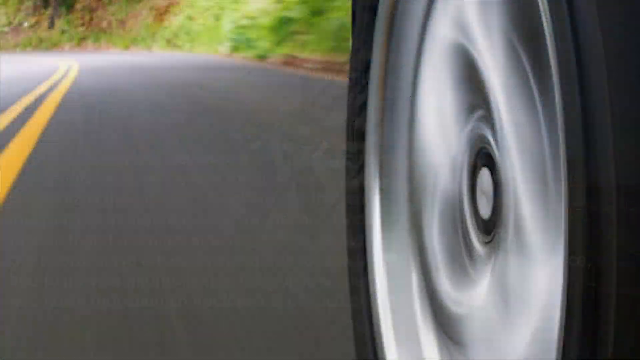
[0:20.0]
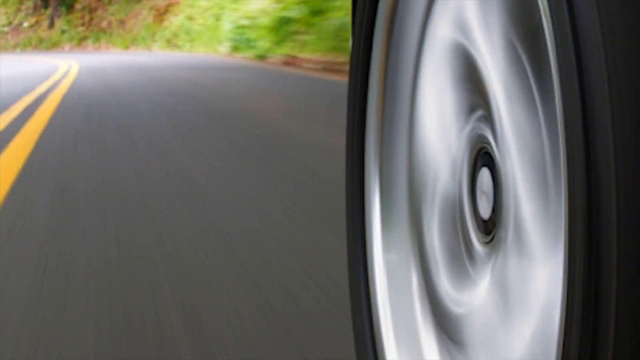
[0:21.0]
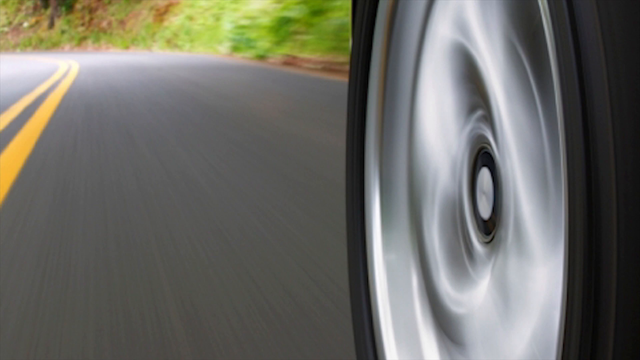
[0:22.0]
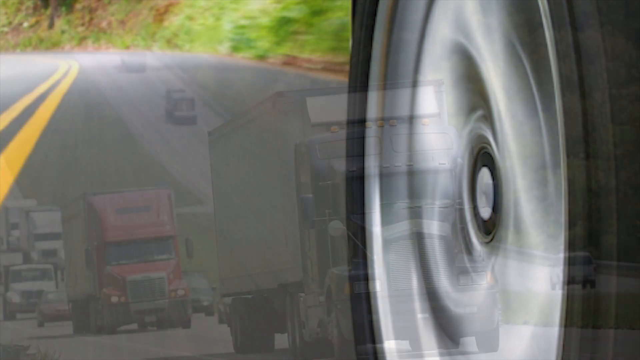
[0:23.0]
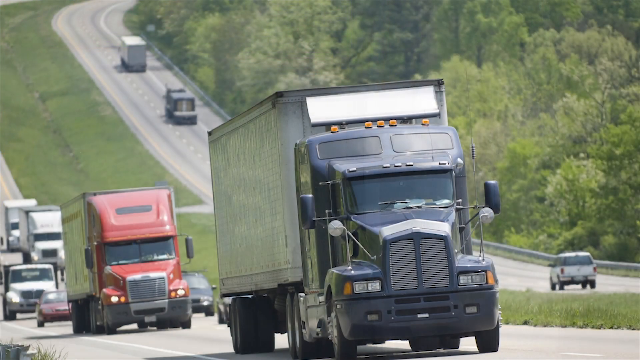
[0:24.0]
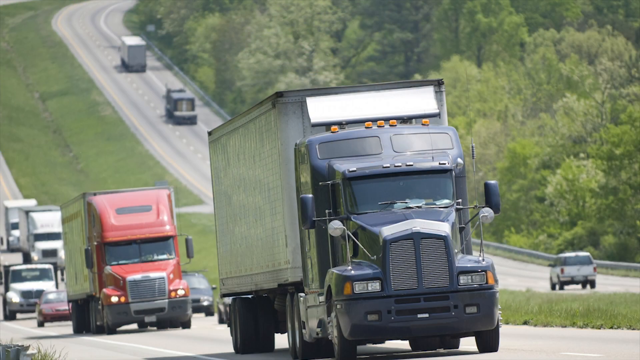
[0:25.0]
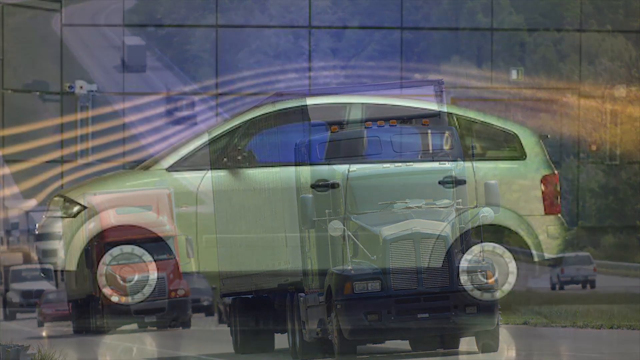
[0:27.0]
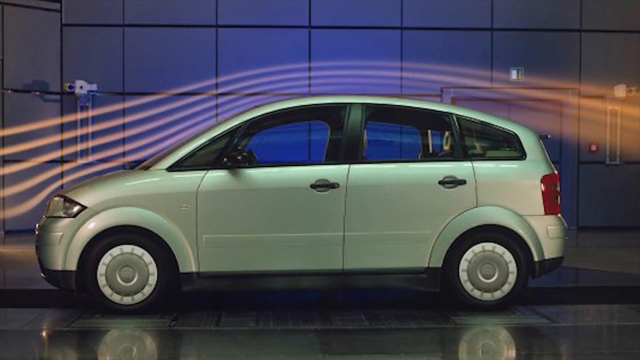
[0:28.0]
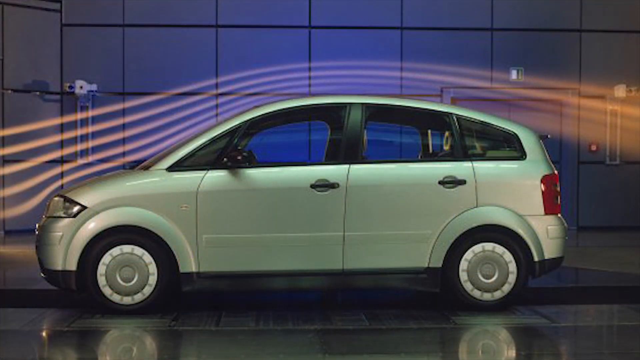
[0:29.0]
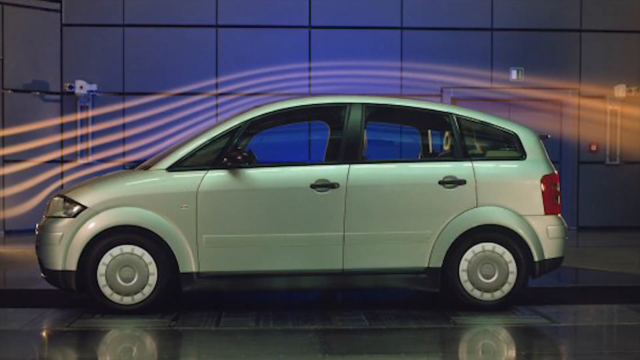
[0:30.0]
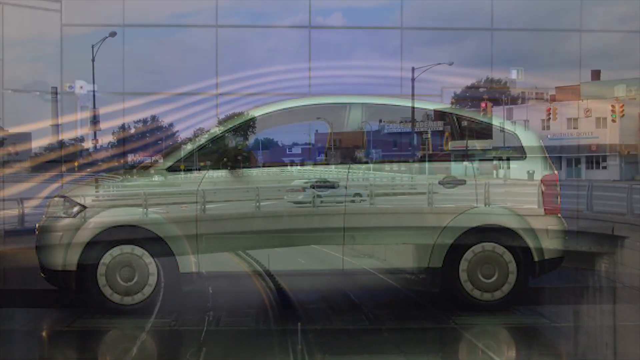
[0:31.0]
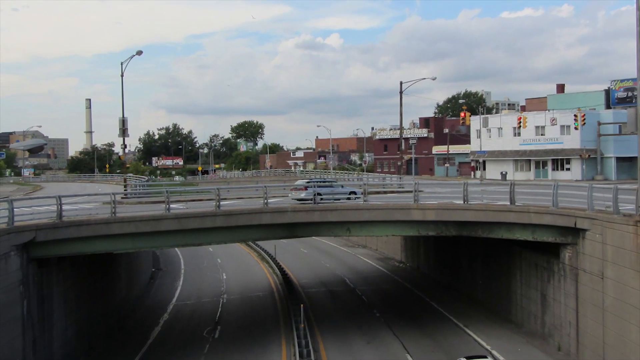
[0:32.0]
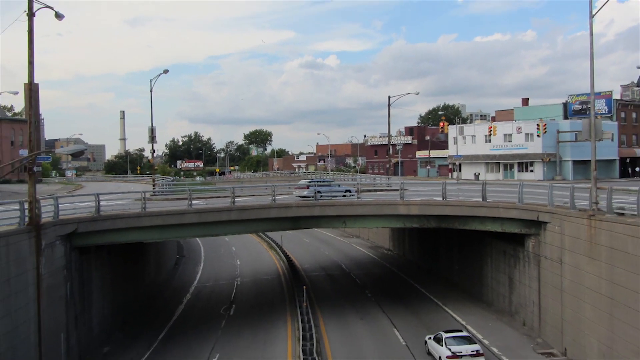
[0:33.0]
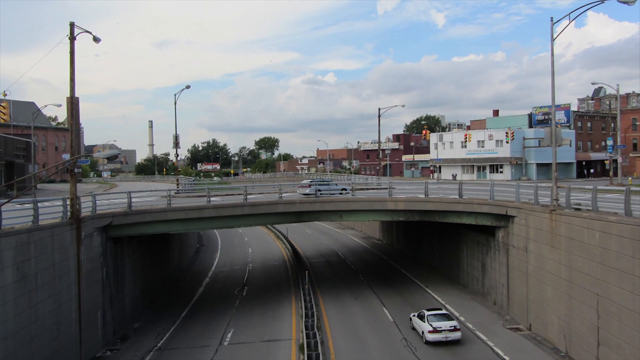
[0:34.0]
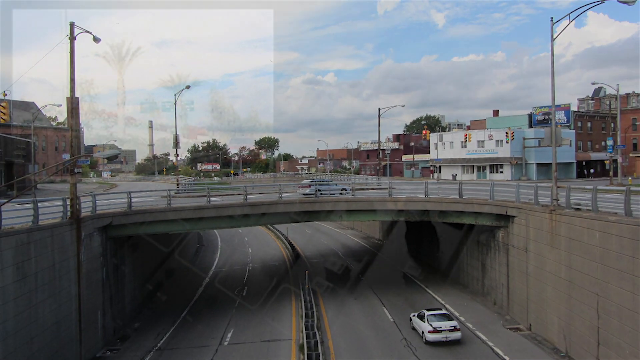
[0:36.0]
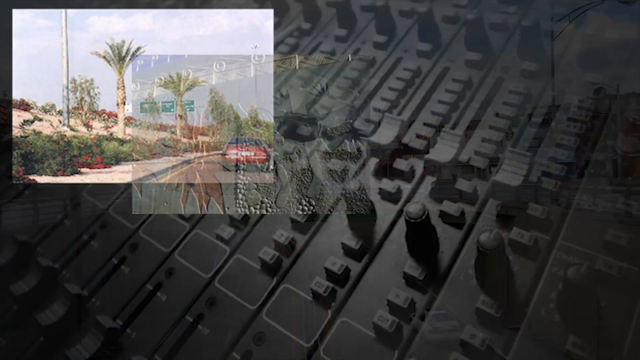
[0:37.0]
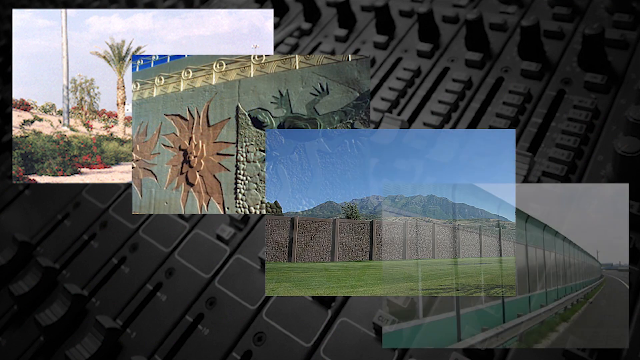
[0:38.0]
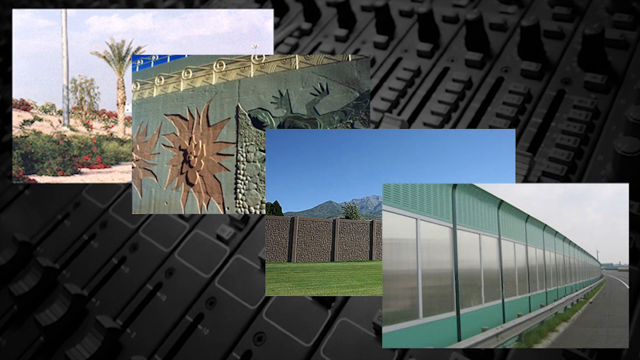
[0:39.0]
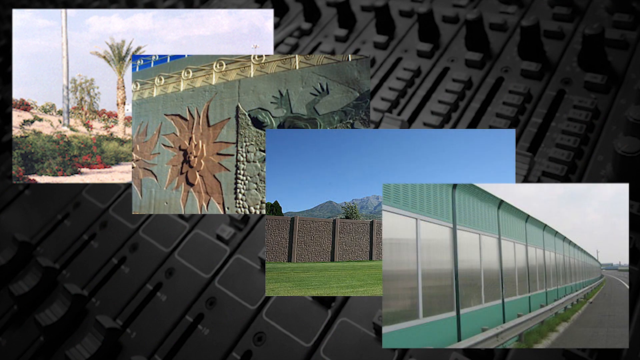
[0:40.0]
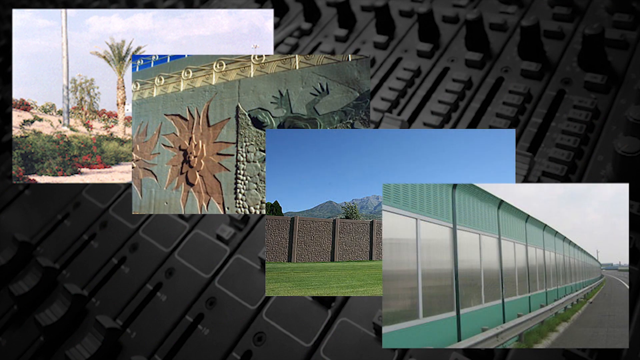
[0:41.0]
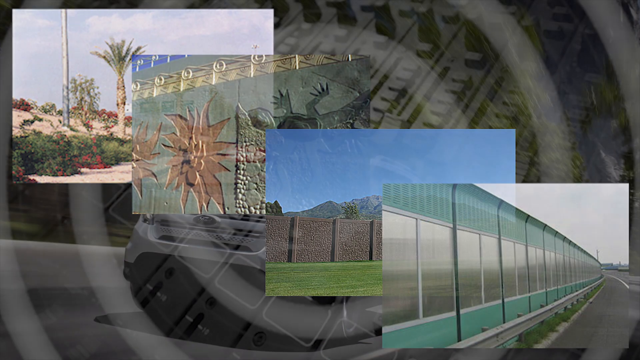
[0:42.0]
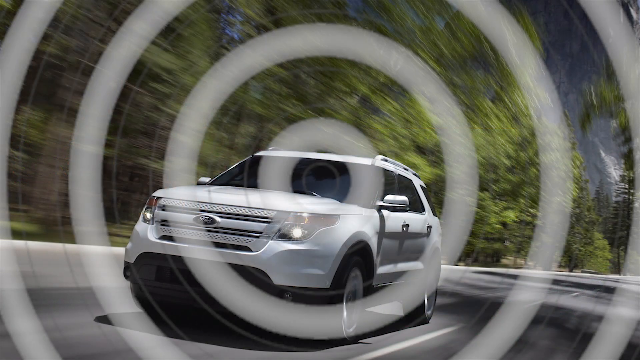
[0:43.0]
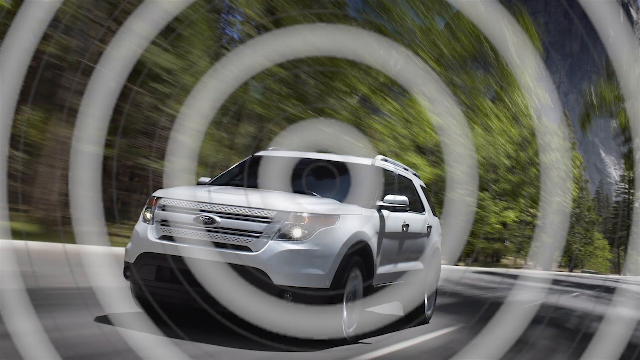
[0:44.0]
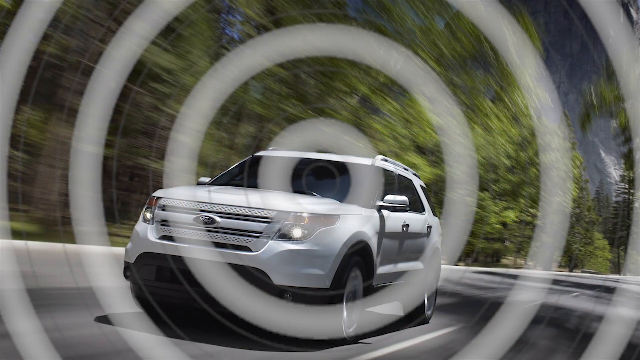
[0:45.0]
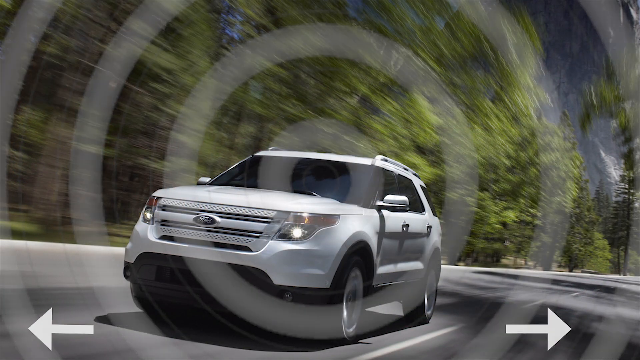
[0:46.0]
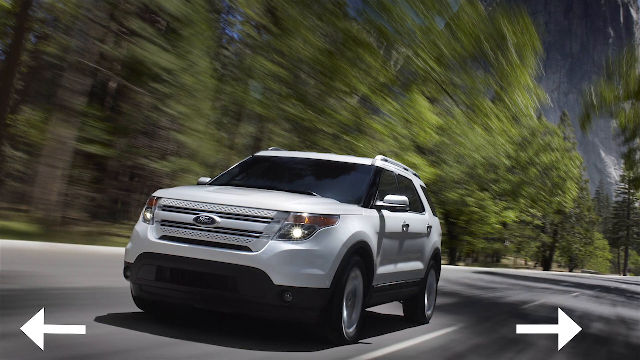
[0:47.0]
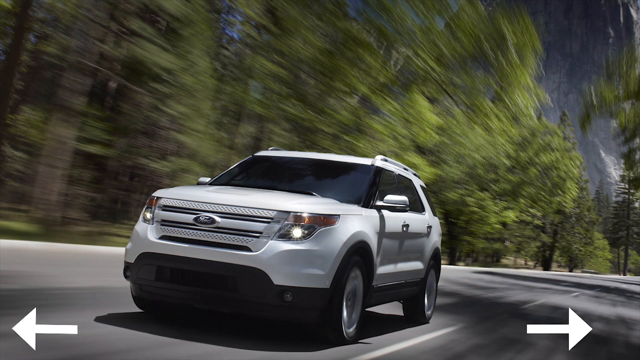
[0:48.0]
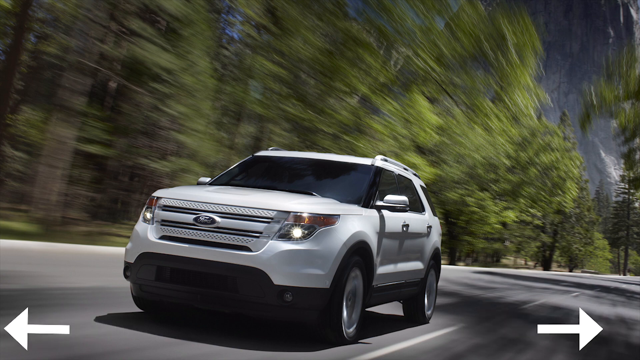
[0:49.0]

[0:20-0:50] A still photo taken from a low angle beside a car moving forward in the right lane of a two-lane road or highway. The double yellow line is just left in the frame, and the road appears to be at the onset of a bend to the left. The pavement is rather new, and the lane markers are clear, newly painted yellow. Taking up a little less than half of the frame is the vehicle's left front tire in motion; the camera is at tire level, so no other part of the vehicle is visible. The tire appears to have a light alloy rim or hubcap and is motion-blurred even though it is a still photograph. To the right of the road there appears to be an embankment with light green greenery, undergrowth or bush, and maybe some sign of an incline, as if the road were carved into a hillside. The photo dissolves into another still photo of semi-trailer trucks on a two-lane highway with a grassy green median between the lanes going in opposite directions. To the right of the highway appears to be a semi-dense wooded area or forest. The oncoming lane is closest to the camera: in the foreground is a semi-trailer truck with a purple or navy cab, followed by one with a red cab, and behind that appear to be two with white cabs. In the lane going away from the camera is a white SUV that looks like a Ford Explorer or something similar, and further back in that lane appear to be two other trucks. The road seems to be on a slight upward gradient toward the camera. This dissolves into a still photo of a green four-door hatchback that looks like a small energy-efficient car, possibly an electric vehicle. It is a very light metallic green, almost champagne, a kind of mint green. It apparently is in wind tunnel testing, with streams of smoke following the car's aerodynamics. The wall behind the car appears to have acoustic tiling of medium-sized, almost square rectangles that appear to be three by two feet. Next is a photo of an overpass with the highway passing beneath the bridge. On the right side of the overpass are streets or an exit ramp running parallel to the highway, next to what appears to be a two-story white commercial building, and behind that appears to be a red brick commercial building or facility. The camera zooms out on the overpass. There appears to be one small gray vehicle, similar to the earlier hatchback, crossing the overpass, and one vehicle that has just cleared the underpass. The shot dissolves back to a recording mixing board, and four inset photos quickly fade in over it in sequence from the upper left corner diagonally down toward the lower right corner. The first appears to show palm trees newly planted beside a highway or highway exit. The second shows what appear to be artistic wall treatments with abstract art rendering a lizard or maybe a starfish in beige, the lizard slightly green; it appears to be a sound barrier, grayish with a green tint. The third, fading in rapidly after the second, appears to be a sound barrier with a hill or mountain behind it, a clear blue sky, and green grass in front of the wall. The last, in the lower right, shows a light green sound barrier that appears to have a reflective surface in the middle looking like high-rise window frames; it curves inward toward the highway at the top, and there appear to be dark gray frame supports every 10 feet. The picture then transitions to a still photo of a white Ford SUV moving toward the camera, overlaid with white concentric circles that appear to represent road noise. The circles abruptly fade away, leaving the photo of the SUV, which appears to have been photographed in motion, with blur and tall green forest growth beside the highway. On the lower third of the frame, a subtle animation of almost totally transparent gray bold arrows originates from the center of the bottom edge and moves continuously outward to the right and left.